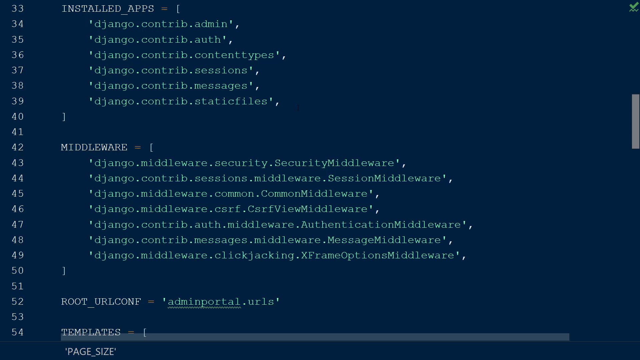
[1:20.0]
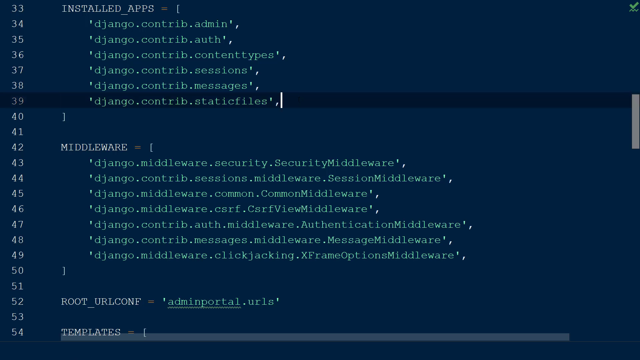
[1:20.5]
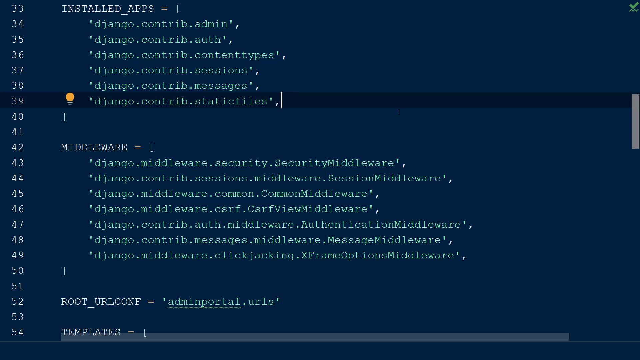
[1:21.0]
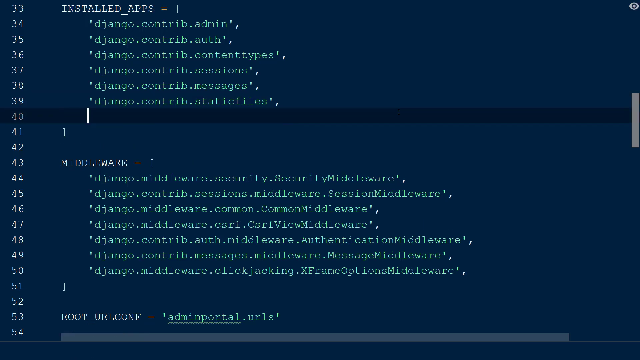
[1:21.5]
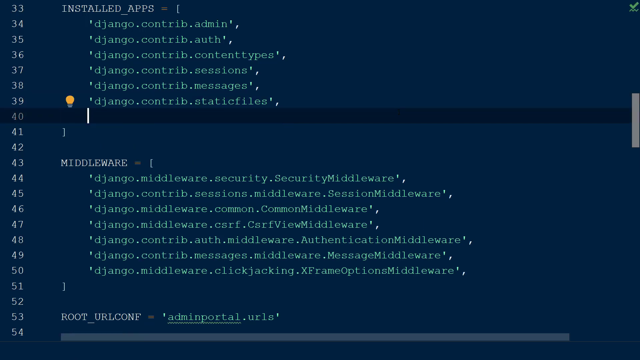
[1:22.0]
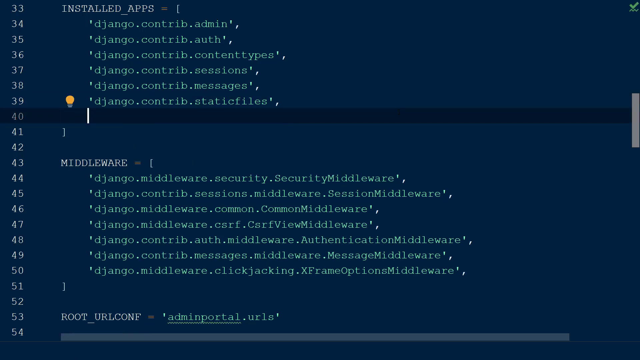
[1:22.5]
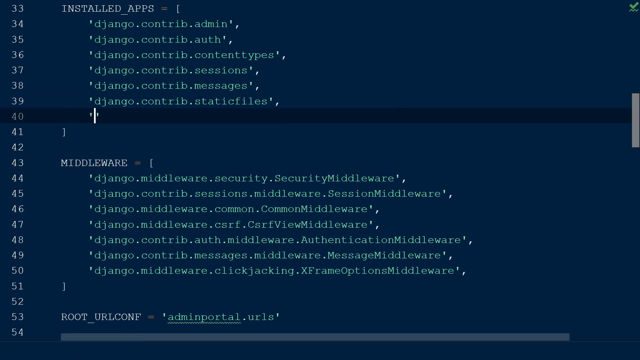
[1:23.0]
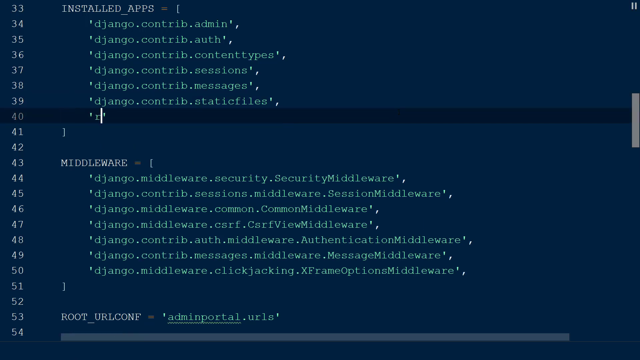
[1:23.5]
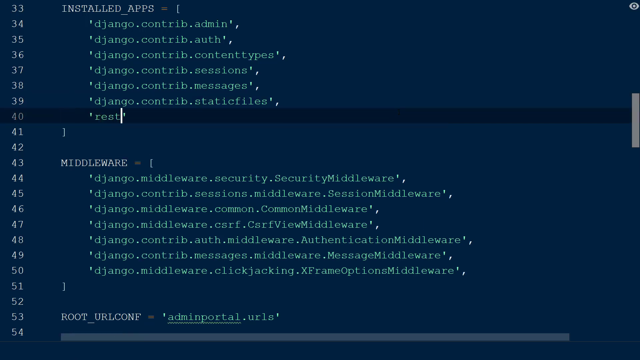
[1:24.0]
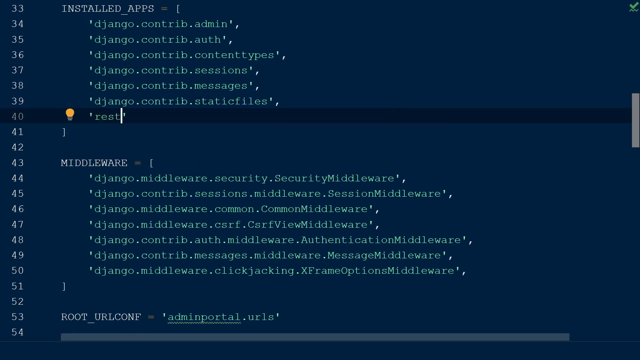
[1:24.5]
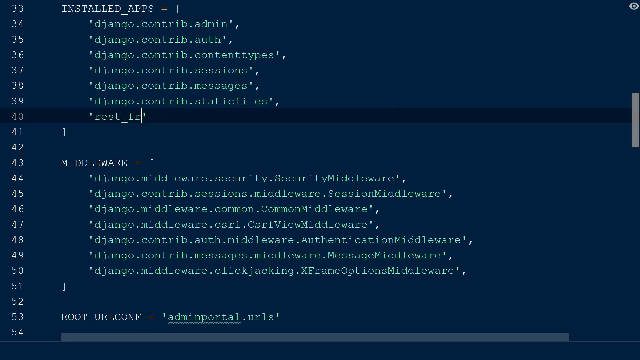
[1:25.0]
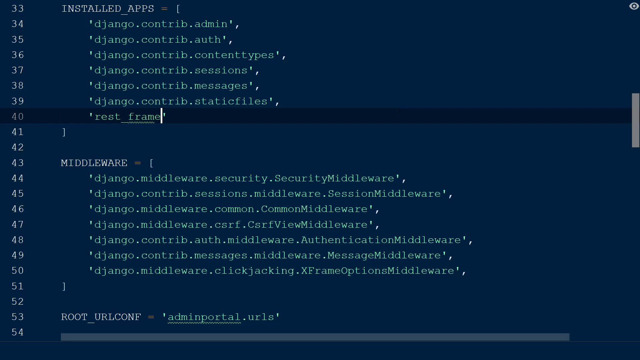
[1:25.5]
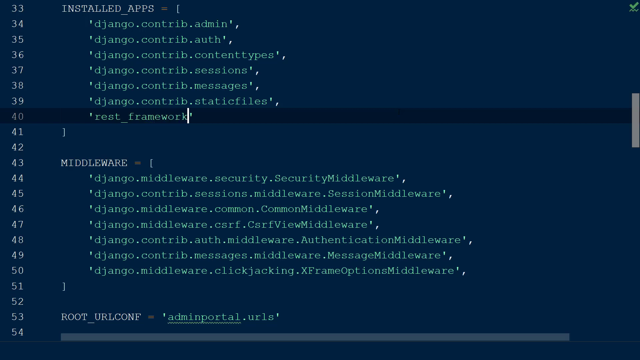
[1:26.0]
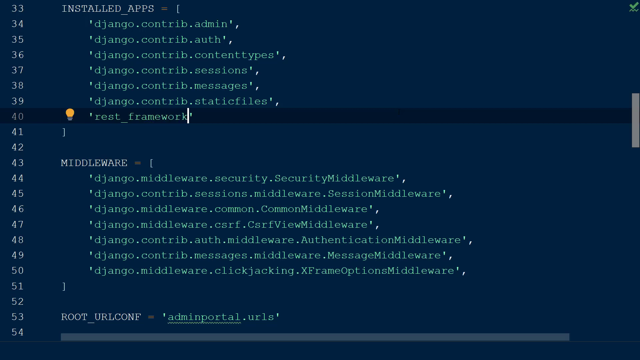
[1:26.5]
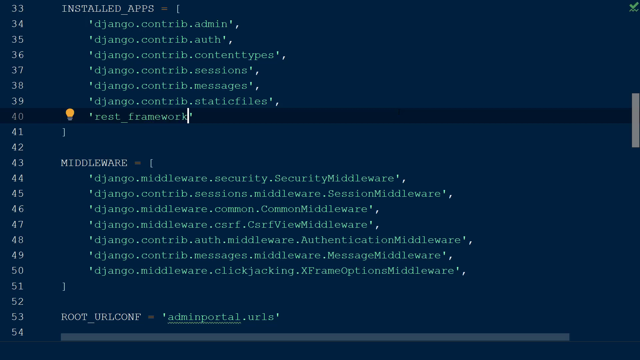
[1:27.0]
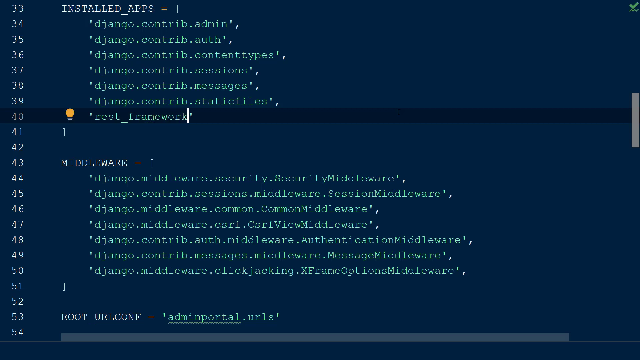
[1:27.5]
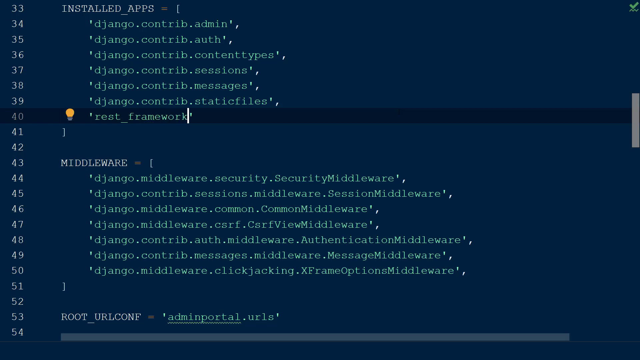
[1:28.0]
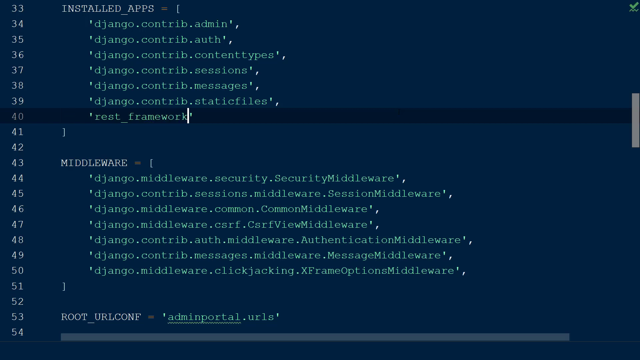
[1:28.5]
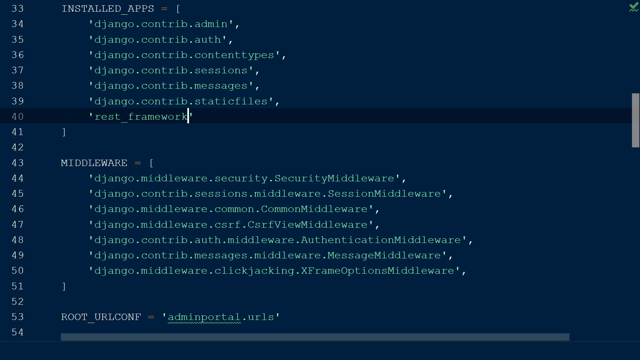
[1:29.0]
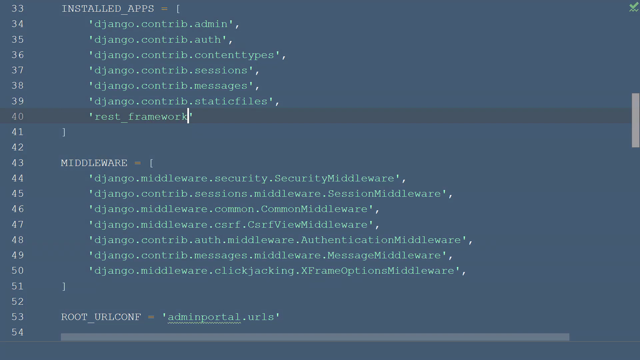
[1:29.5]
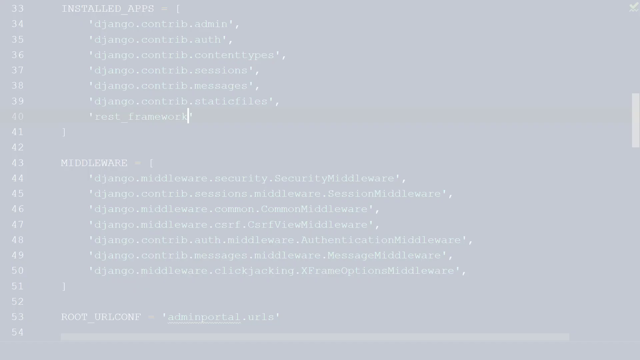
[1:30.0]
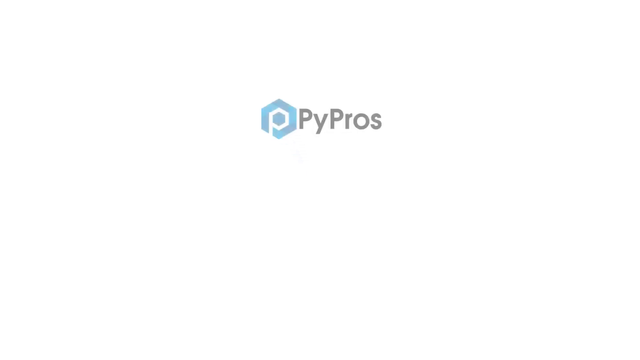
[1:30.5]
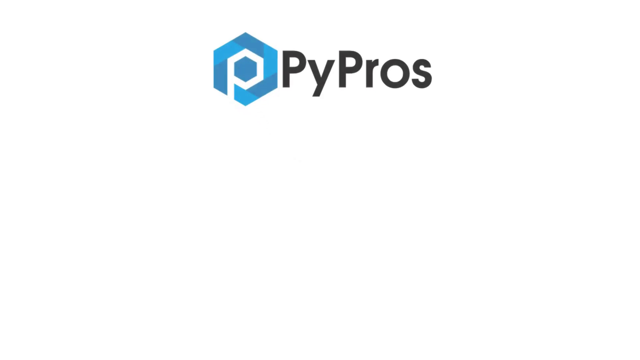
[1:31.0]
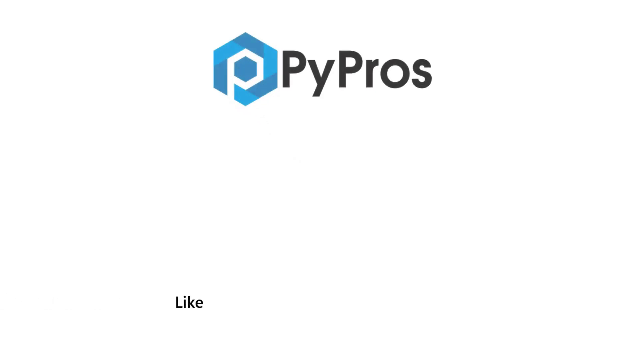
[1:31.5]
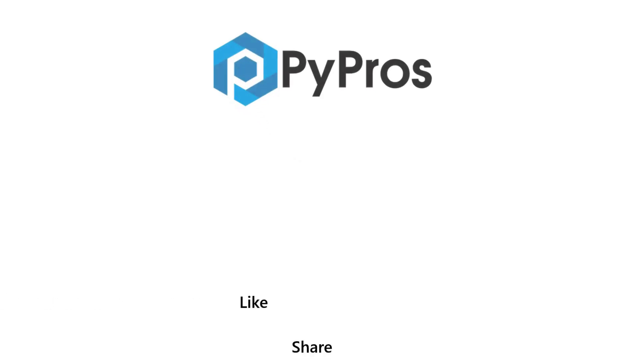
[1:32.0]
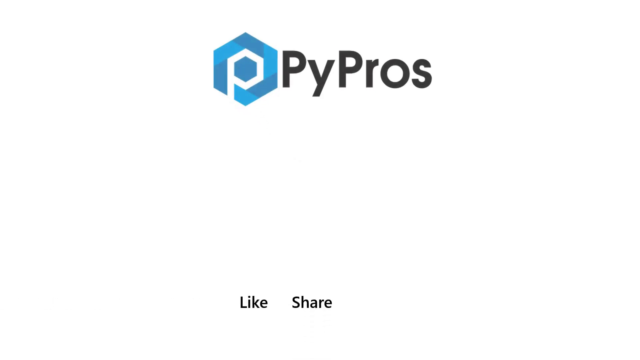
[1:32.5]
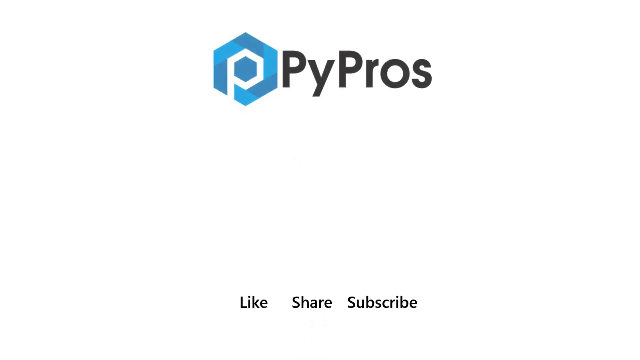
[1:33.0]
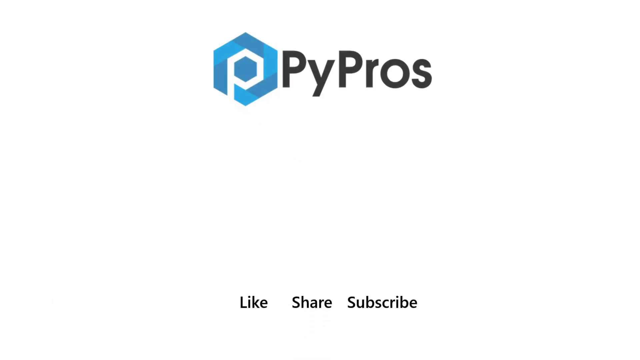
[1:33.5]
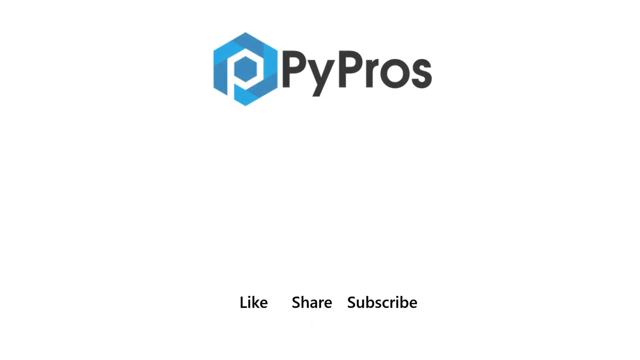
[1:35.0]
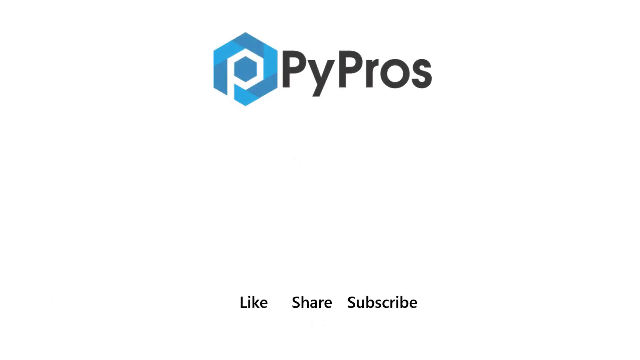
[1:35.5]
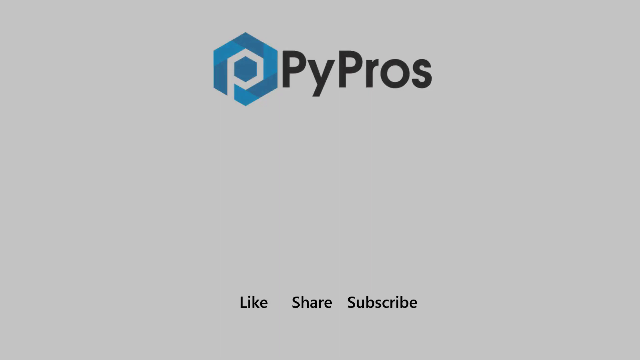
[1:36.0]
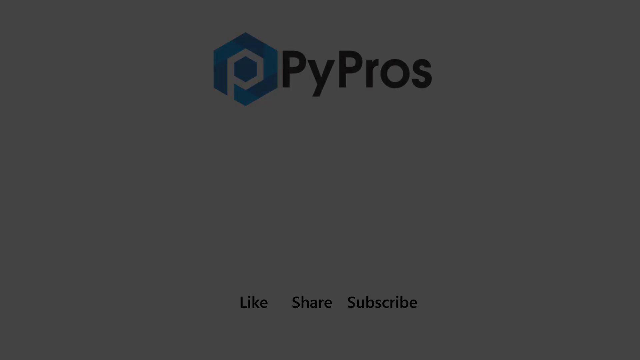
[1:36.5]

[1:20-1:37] The code writing continues. The code uses a lot of punctuation, capital letters and abbreviations, and it seems to be written for a particular piece of software or an app. Possibly the video is meant to teach how to write a particular piece of code. At the end of the video, PyPros appears again, with like, share and subscribe underneath, possibly indicating a channel for coders.